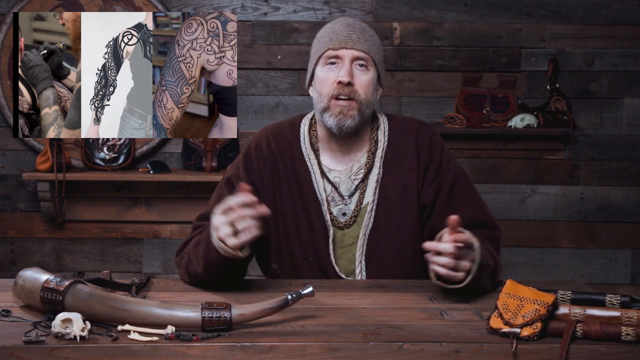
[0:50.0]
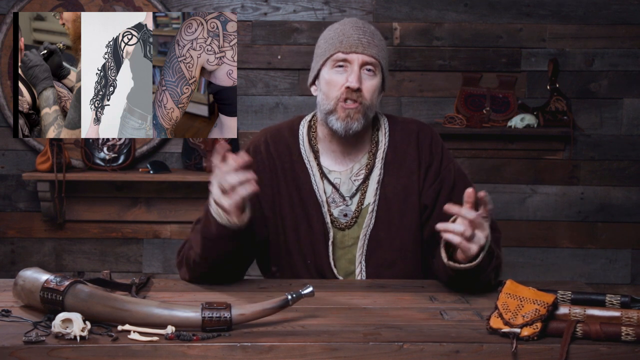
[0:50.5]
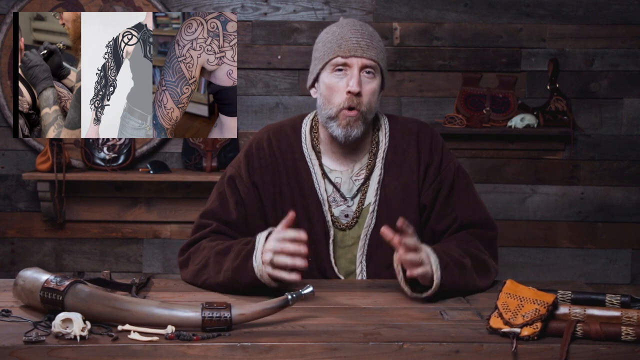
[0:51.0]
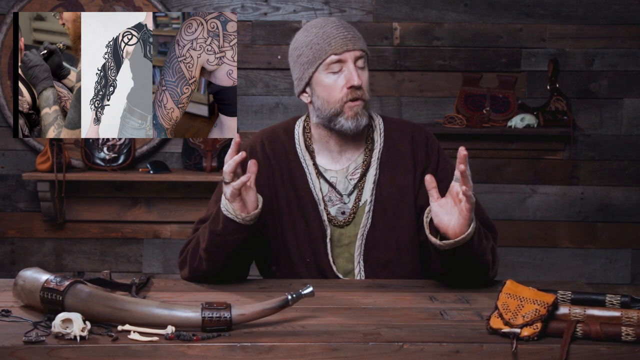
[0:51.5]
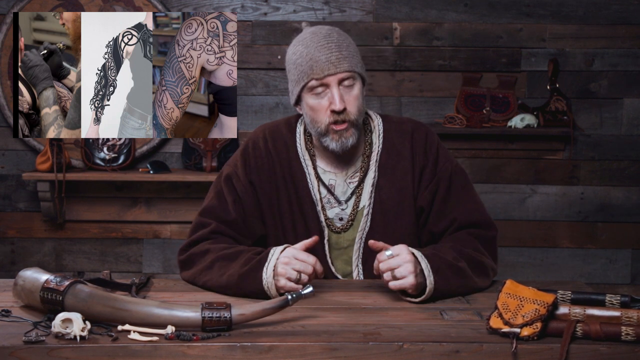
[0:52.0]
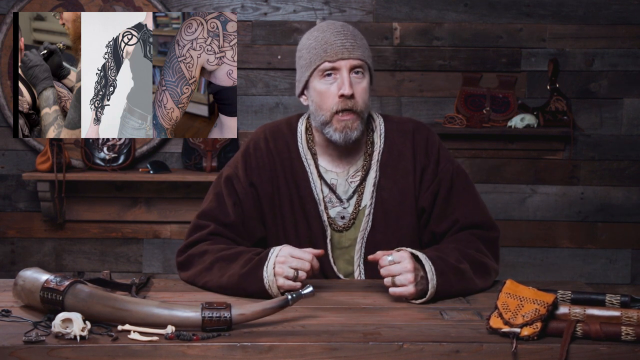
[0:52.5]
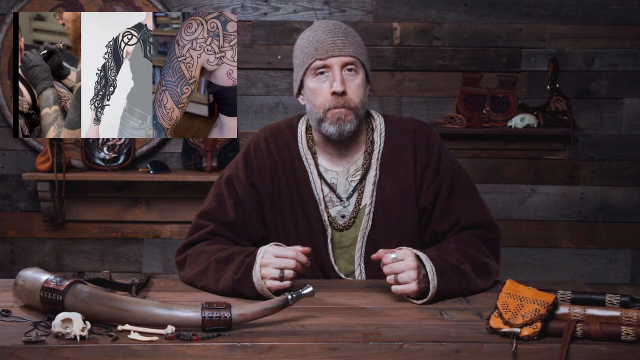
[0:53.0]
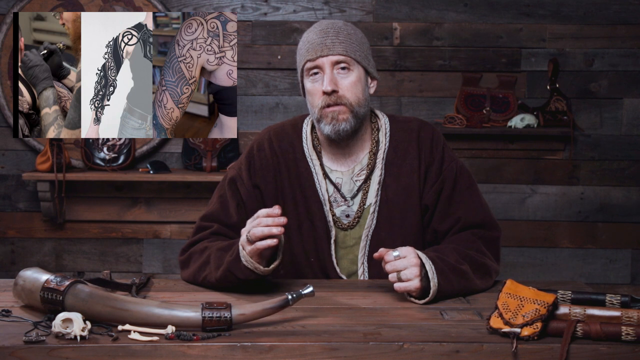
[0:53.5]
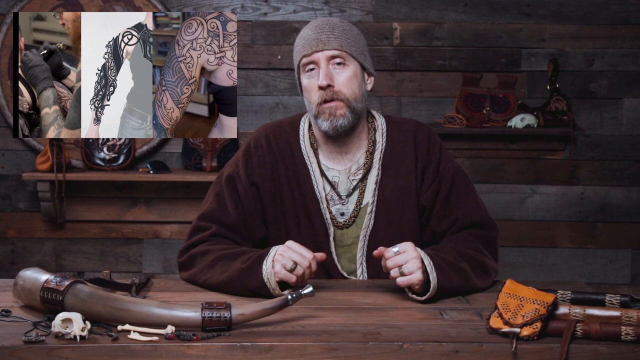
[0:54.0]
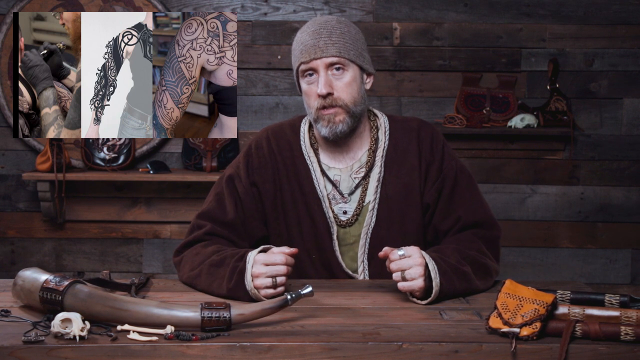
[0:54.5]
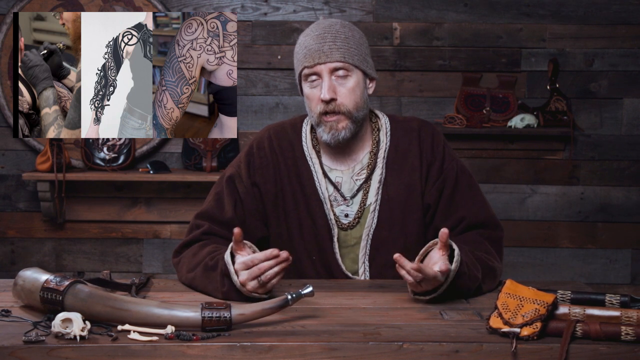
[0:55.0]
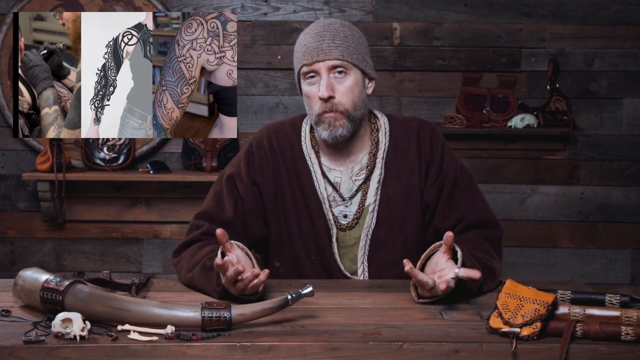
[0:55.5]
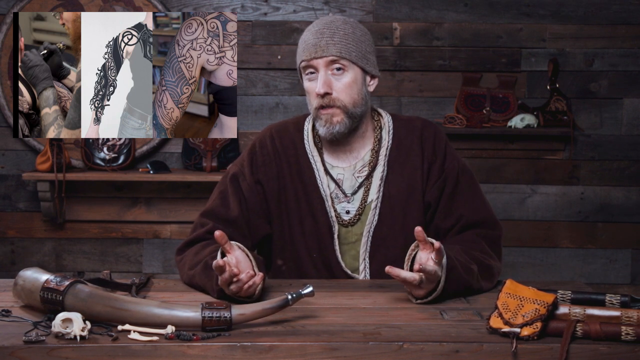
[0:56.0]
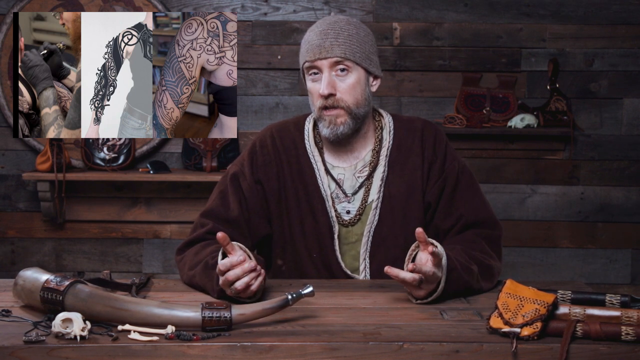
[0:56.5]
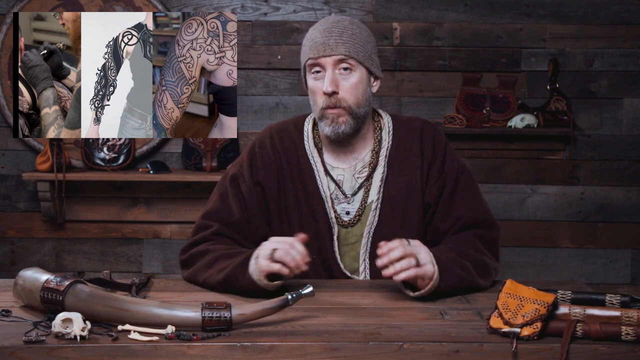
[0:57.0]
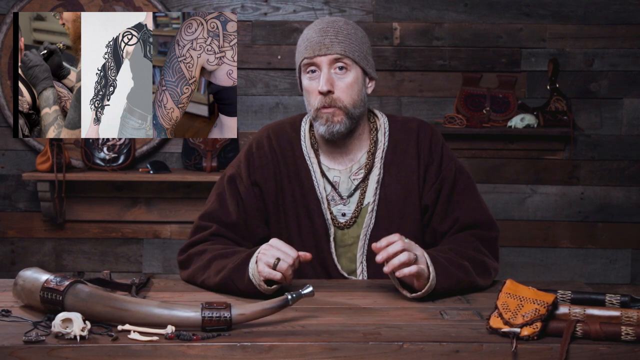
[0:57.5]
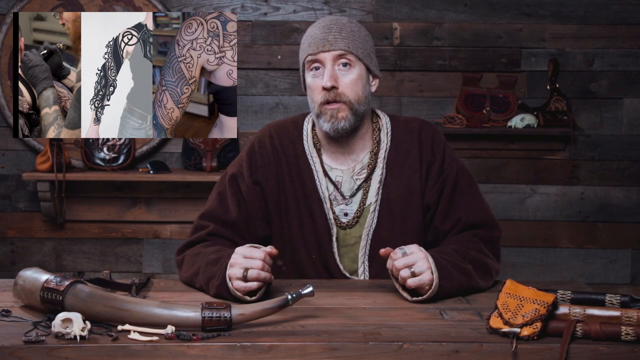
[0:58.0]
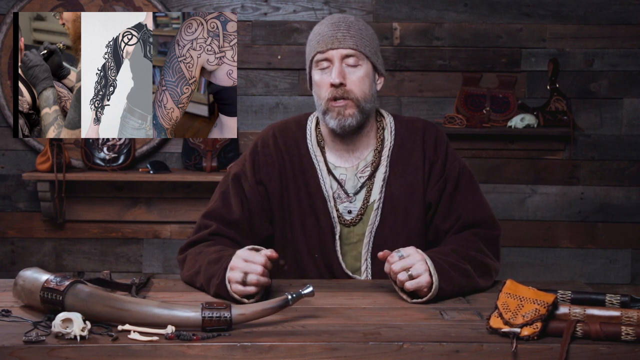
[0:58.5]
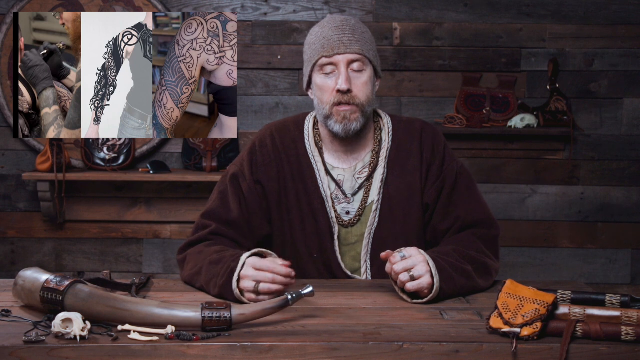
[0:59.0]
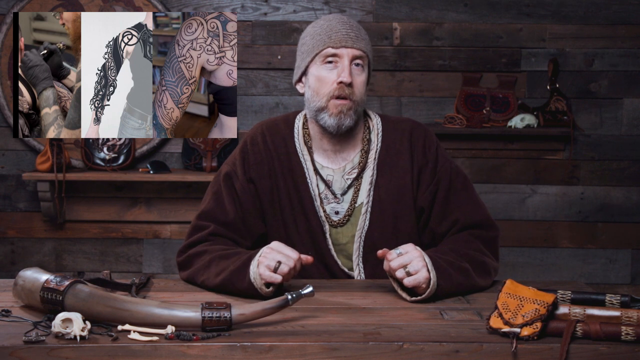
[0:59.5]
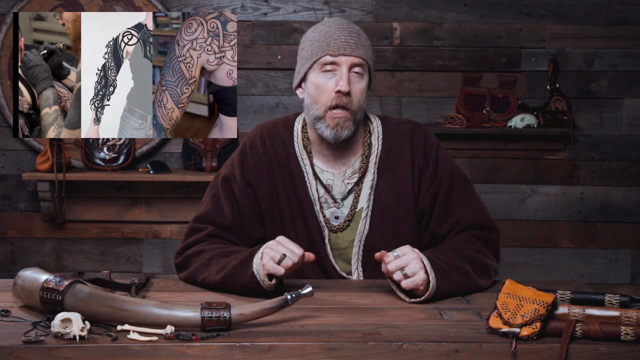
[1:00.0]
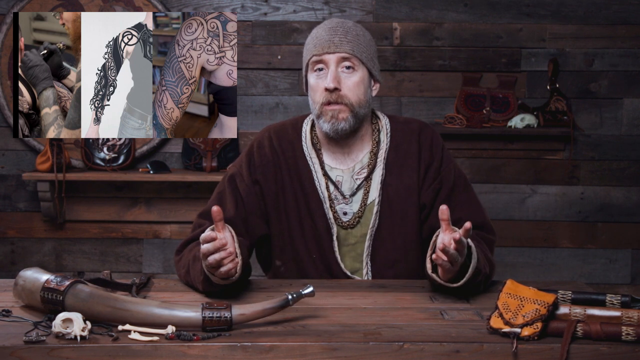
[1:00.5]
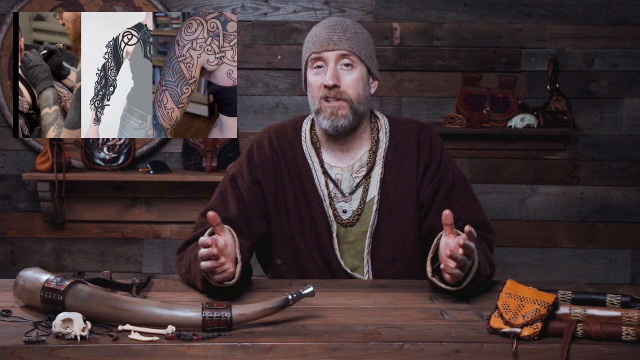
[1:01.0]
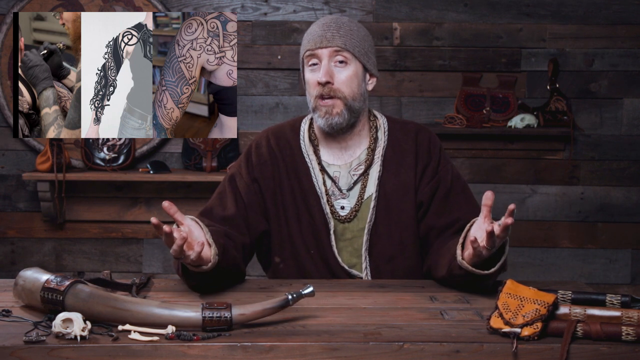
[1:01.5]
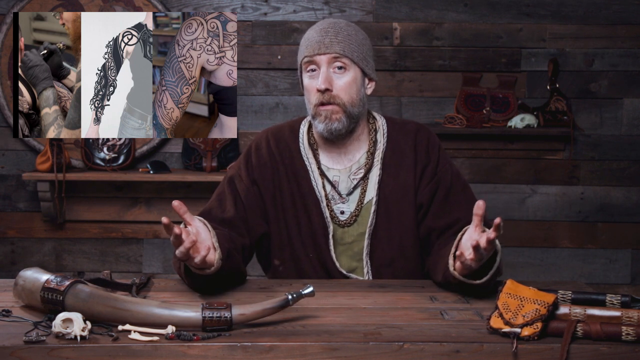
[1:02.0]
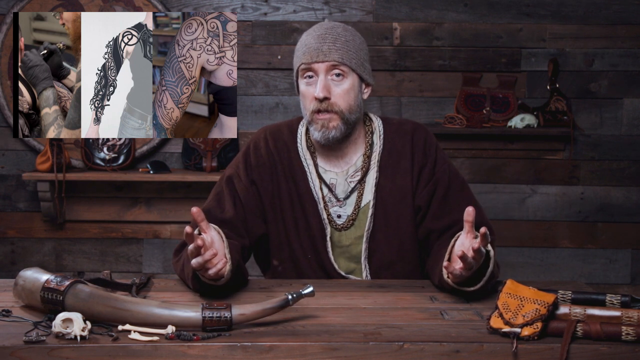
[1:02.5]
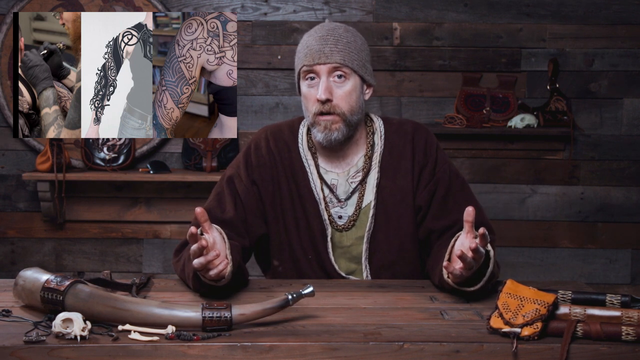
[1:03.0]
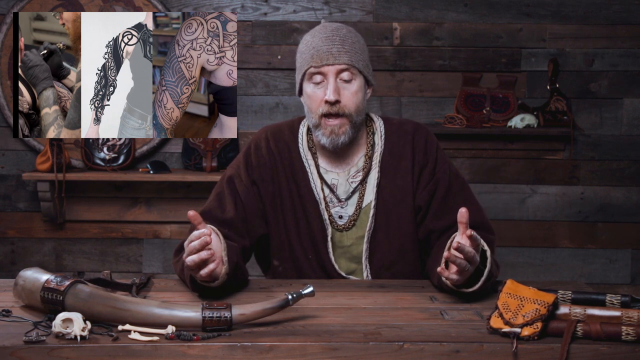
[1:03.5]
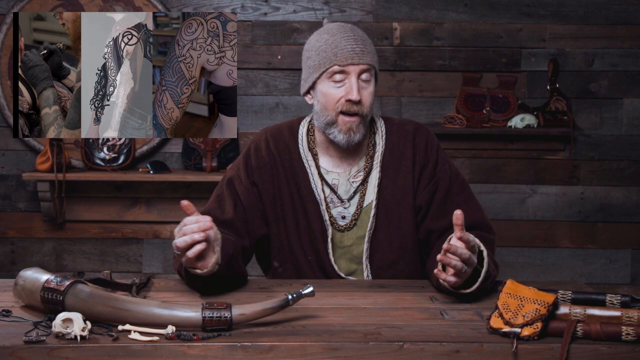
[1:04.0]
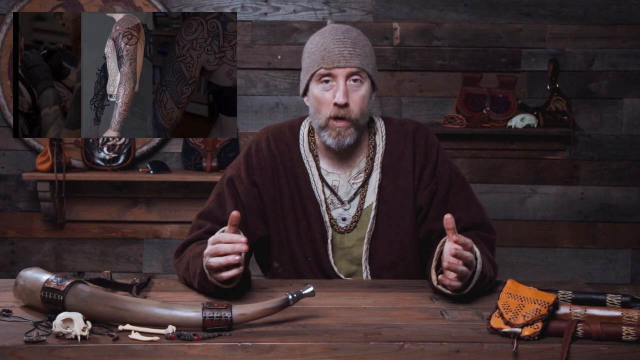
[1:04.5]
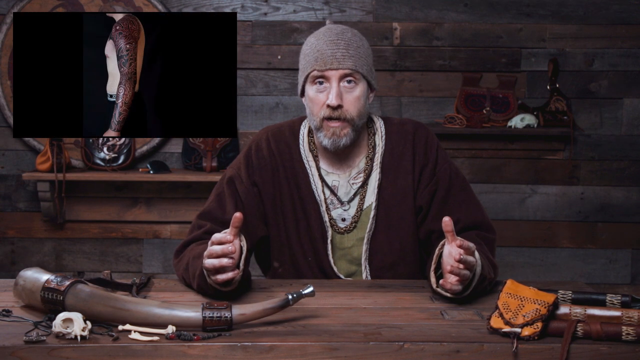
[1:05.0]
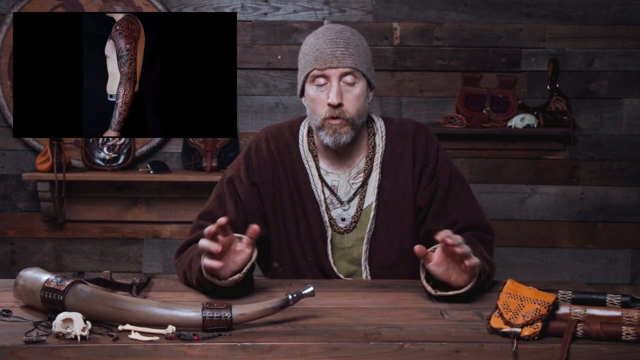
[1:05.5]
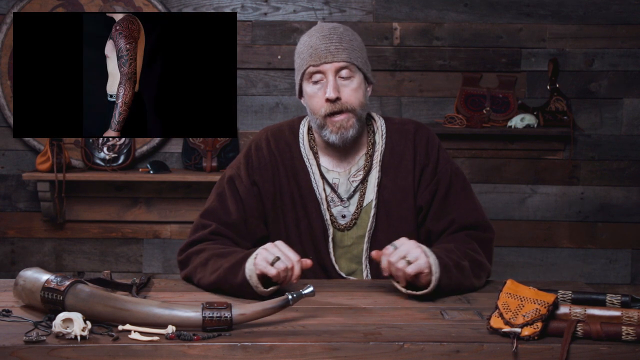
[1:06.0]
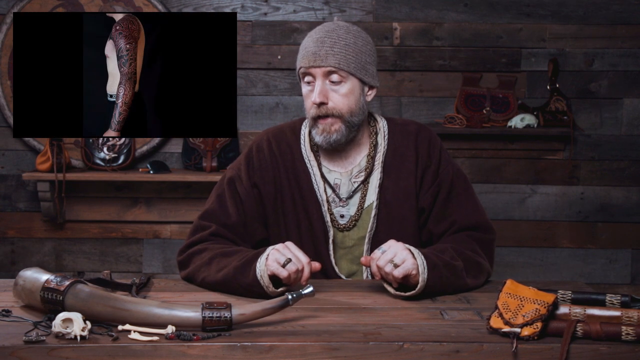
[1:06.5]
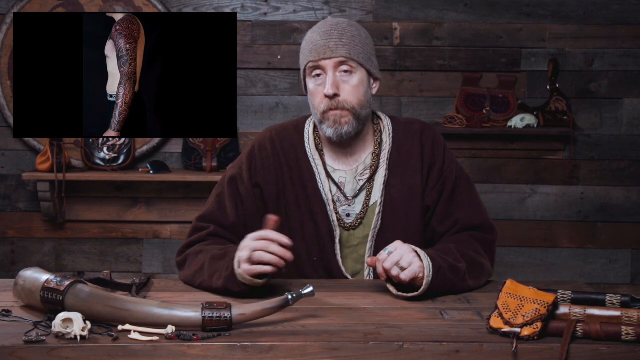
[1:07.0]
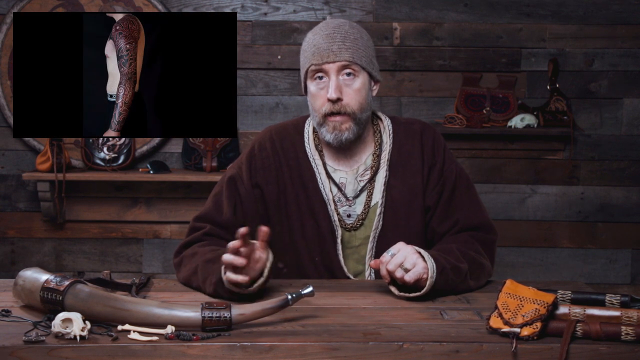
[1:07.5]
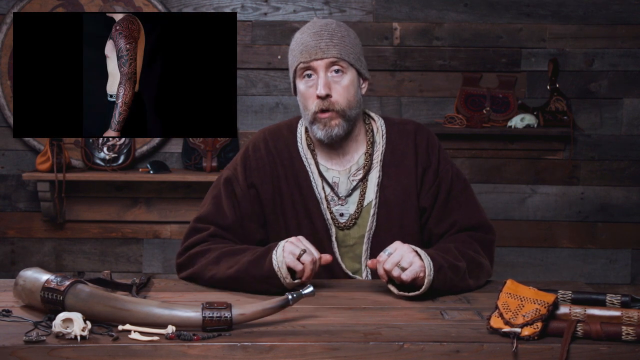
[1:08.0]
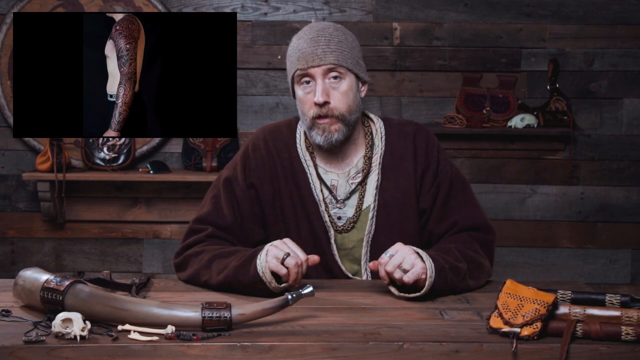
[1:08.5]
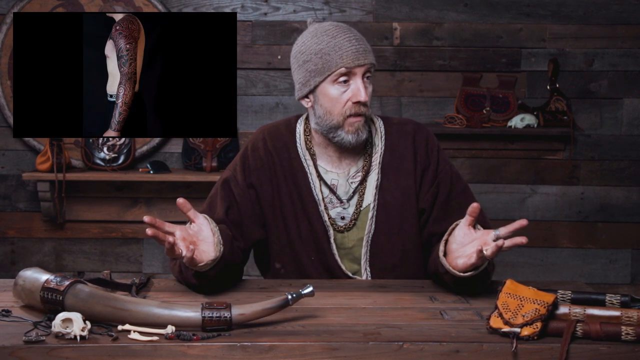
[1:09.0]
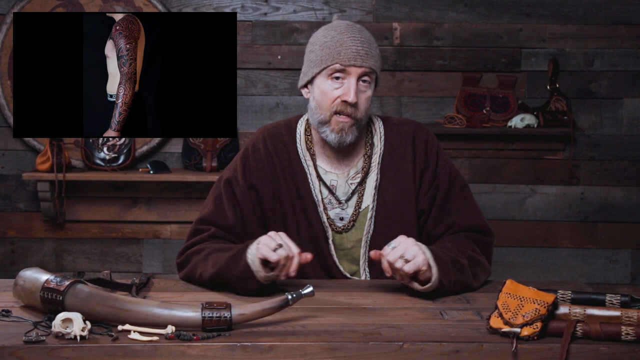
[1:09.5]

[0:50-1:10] In what is like a podcast, a man, probably in his forties, with a grey beard and a moustache, wears a brown beanie and a maroon robe, with rings on his fingers, two on the right hand and one on the left. Behind him in the room is a wall made of planks of wood, and the desk is of the same type of wood. To his left on the desk there is sort of an old horn. Two shelves in the background carry some bags with sort of a Gaelic or Nordic pattern on them. In the top left there is a picture of someone getting a tattoo and then the final result of the tattoo. The man talks to the camera, using his hands as he talks and moving his head slightly toward the left of the screen. He makes very subtle gestures with his hands, with his elbows on the table. The image in the top left corner changes to someone with a tattoo all over their left shoulder and hand; they are shirtless and sort of in side profile, so their face and the rest of their body cannot be seen. The man continues talking, looking left and right occasionally.